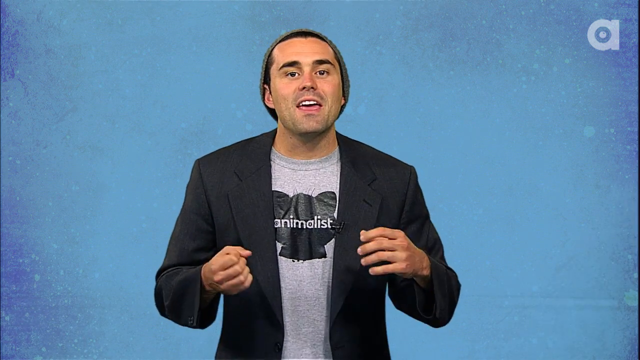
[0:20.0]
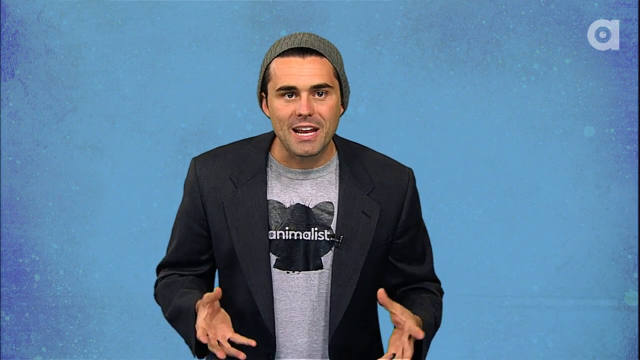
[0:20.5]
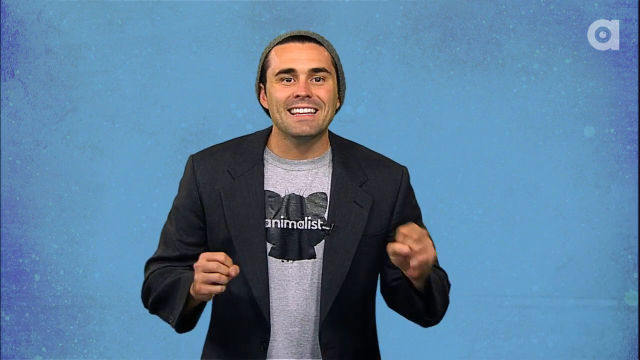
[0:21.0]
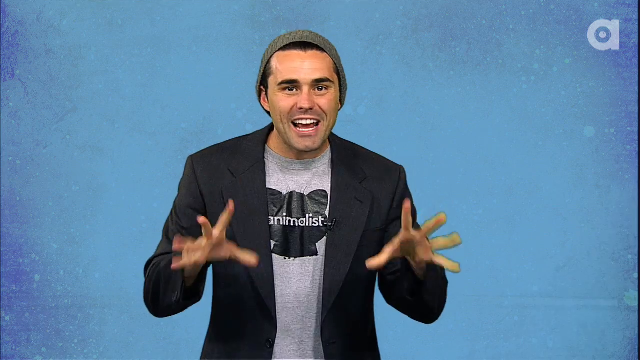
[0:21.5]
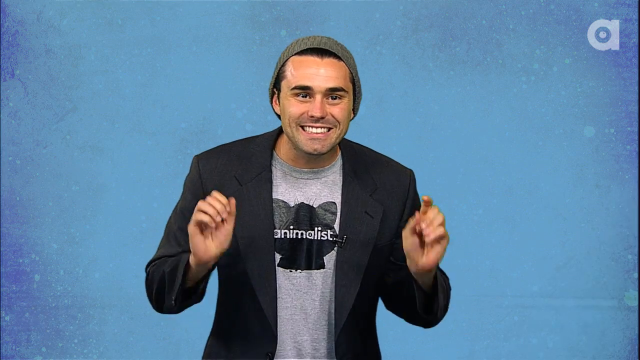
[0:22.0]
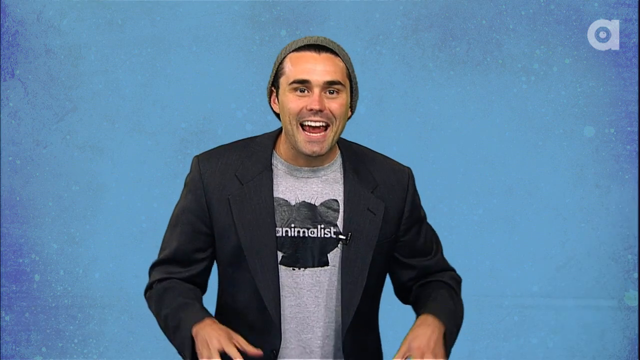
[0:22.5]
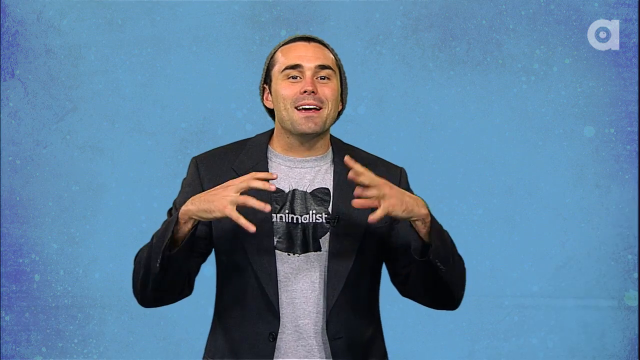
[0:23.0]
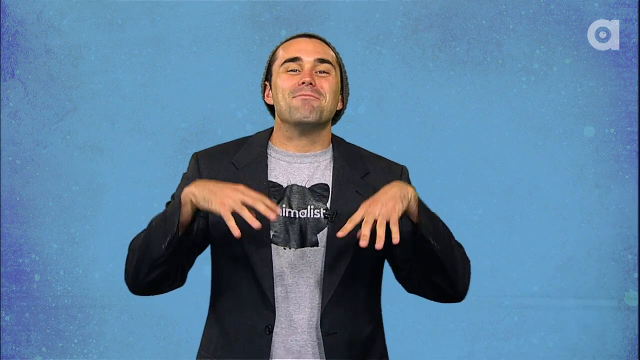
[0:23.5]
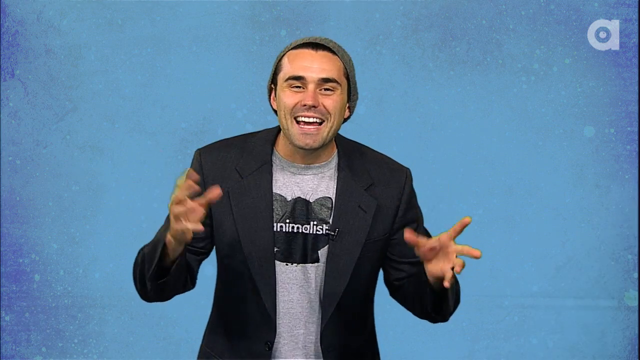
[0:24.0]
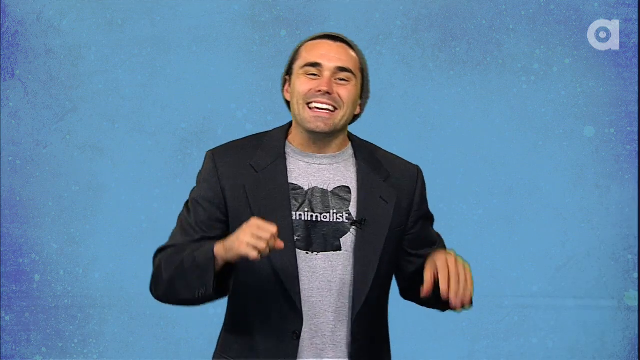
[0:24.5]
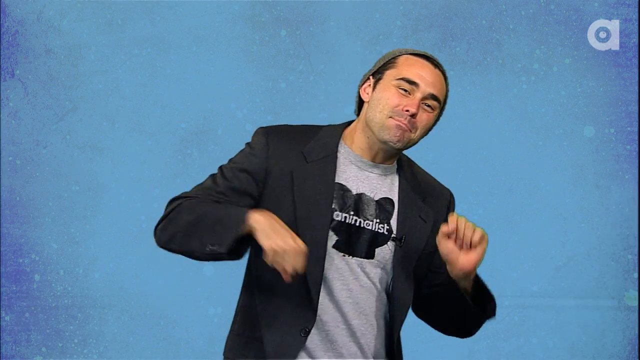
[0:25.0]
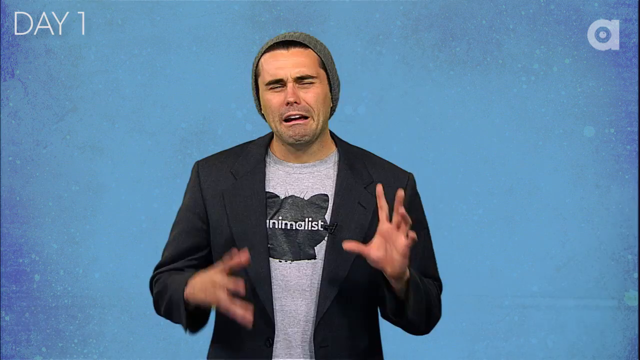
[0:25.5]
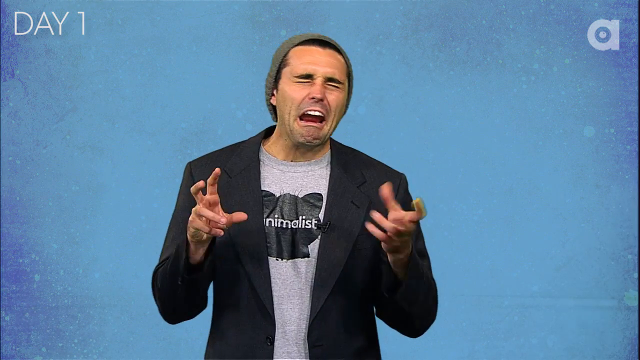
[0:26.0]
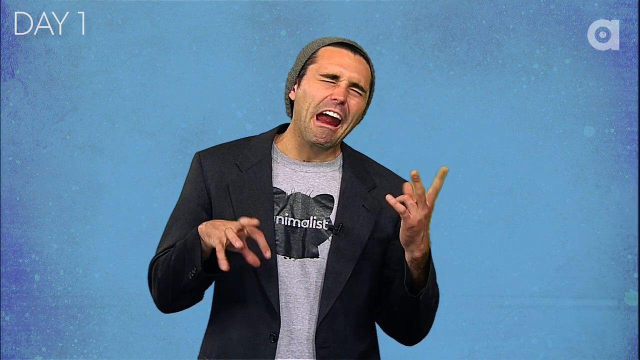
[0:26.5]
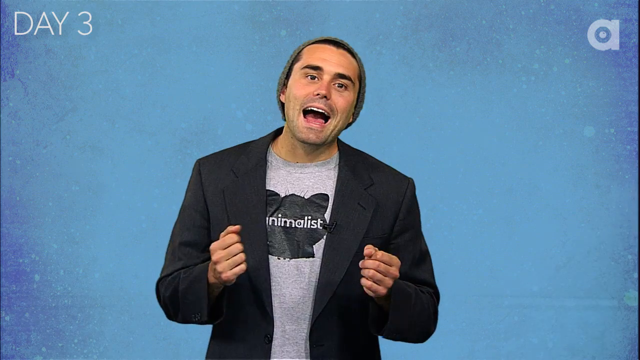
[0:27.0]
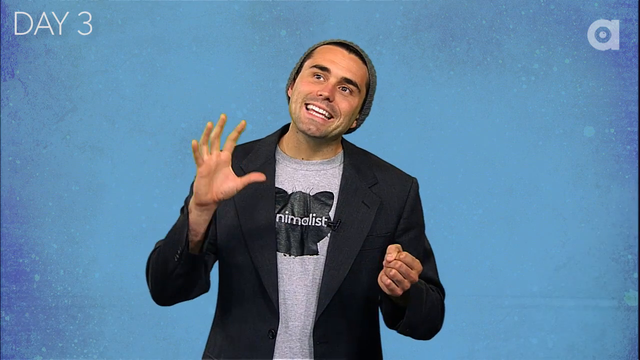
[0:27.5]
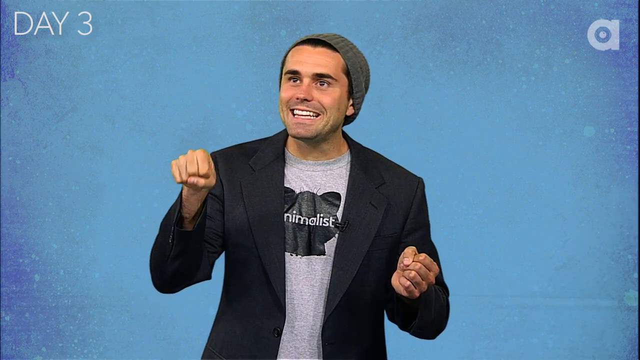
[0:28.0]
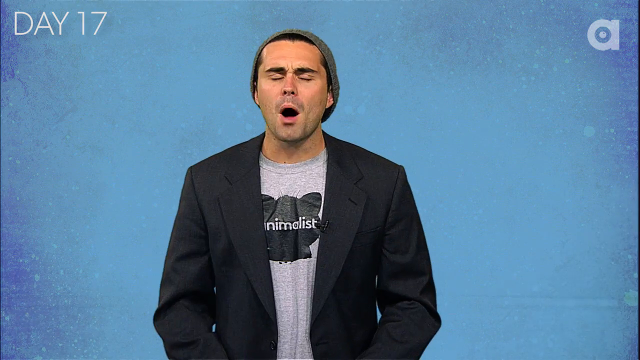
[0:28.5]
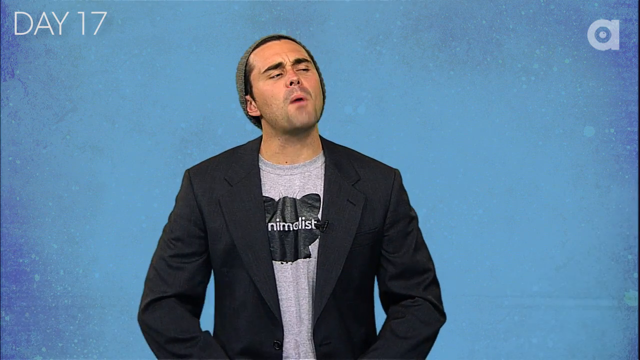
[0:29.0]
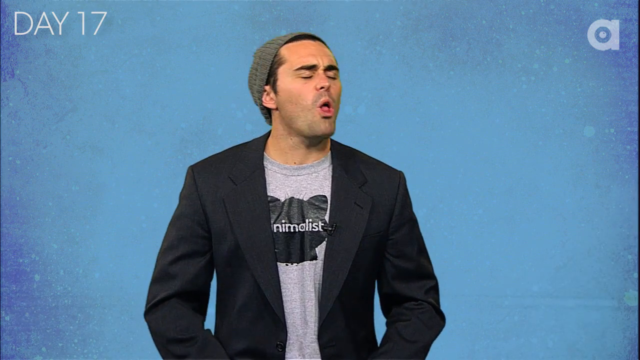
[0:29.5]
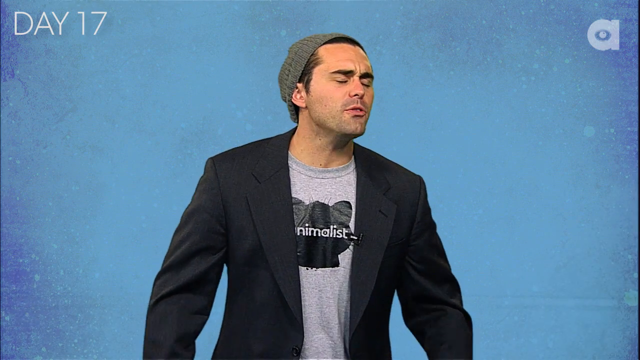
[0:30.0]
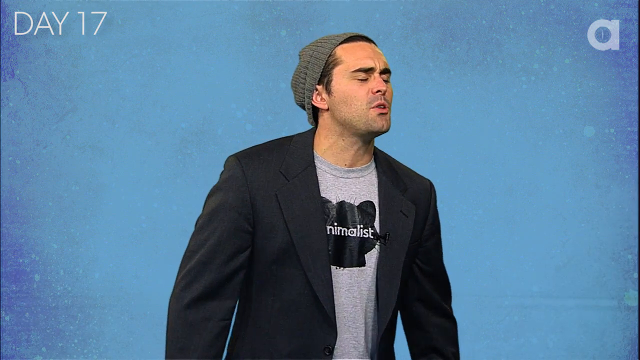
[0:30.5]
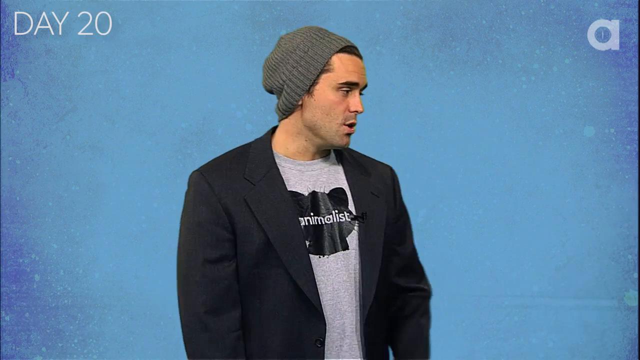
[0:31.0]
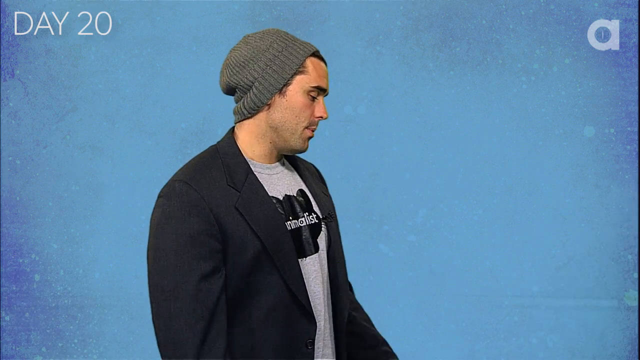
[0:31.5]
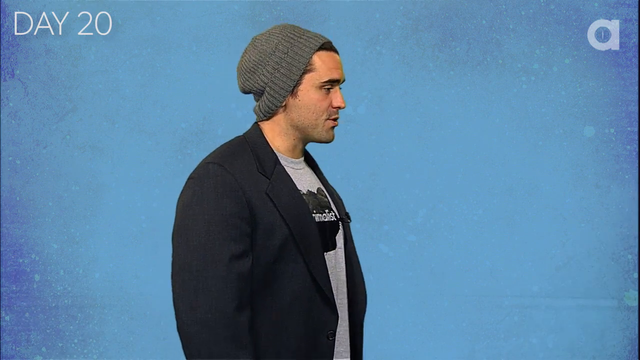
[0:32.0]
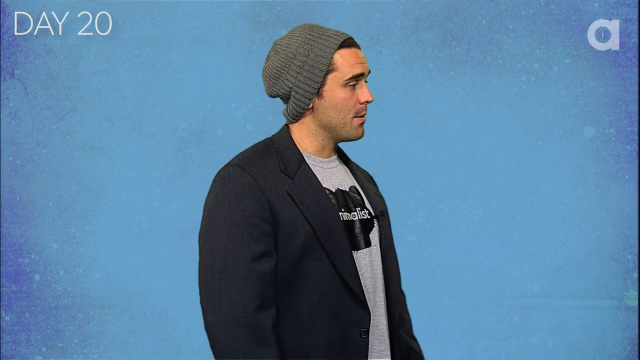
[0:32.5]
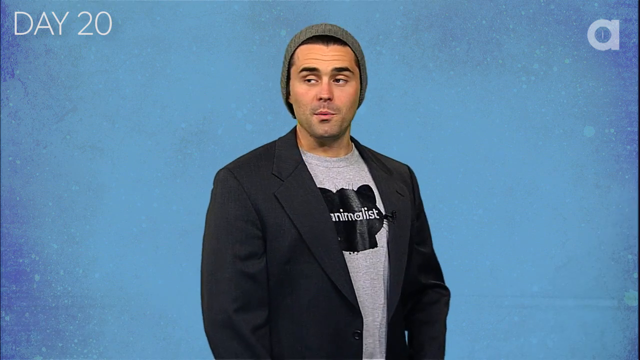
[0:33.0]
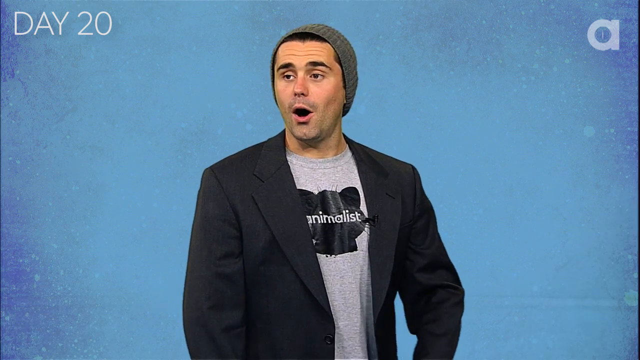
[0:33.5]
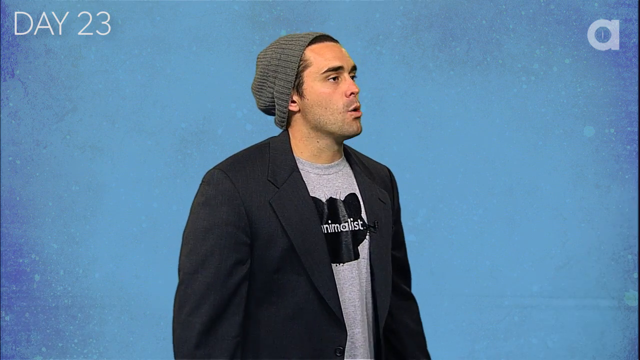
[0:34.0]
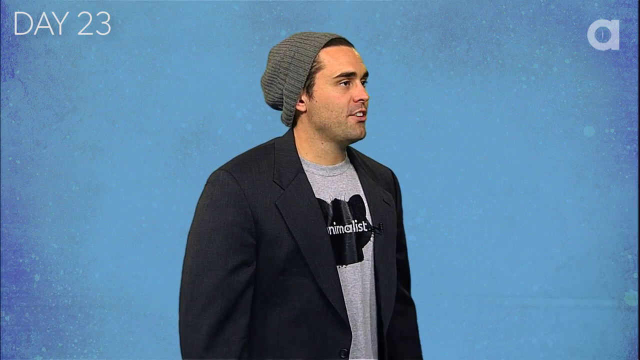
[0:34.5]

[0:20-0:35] The host is against the blue screen background, speaking very animatedly to the camera and then off to the right. In the top left of the screen the word "day" appears followed by numbers that flash very fast from 1 to 23. The host keeps talking animatedly, and the day and numbers pop up in the top left corner again. He gestures a lot with his hands, often looks off to the right, and talks and yells. He has very dark hair covered by a grey beanie. In the top right corner of the screen is a semi-transparent lowercase letter a; it starts as a round circle in the center and, as the video progresses, turns into a very faint exclamation point or faint line.